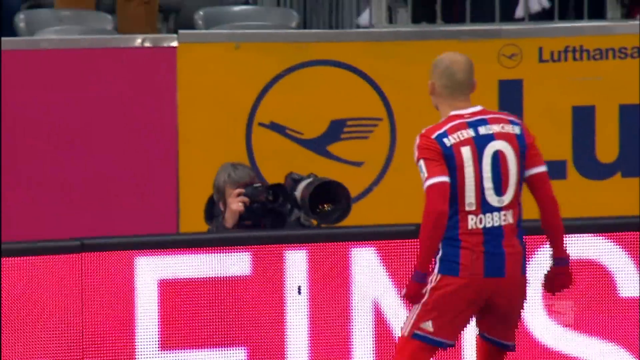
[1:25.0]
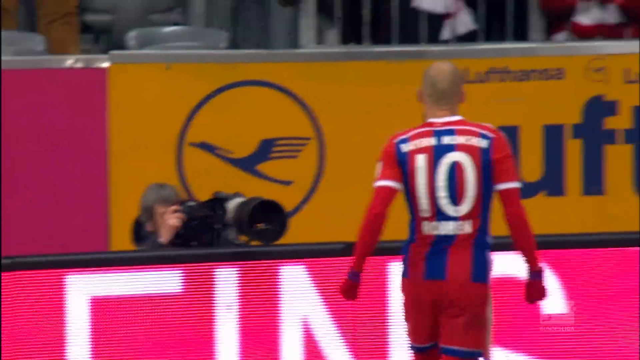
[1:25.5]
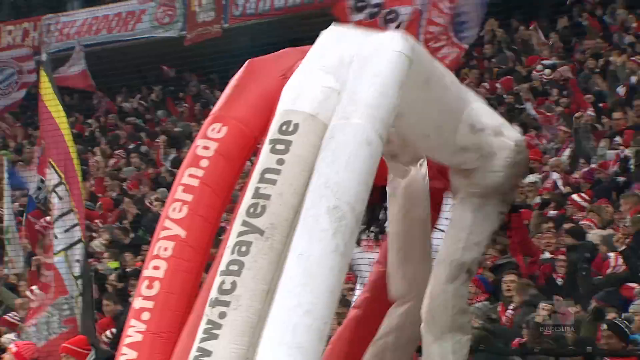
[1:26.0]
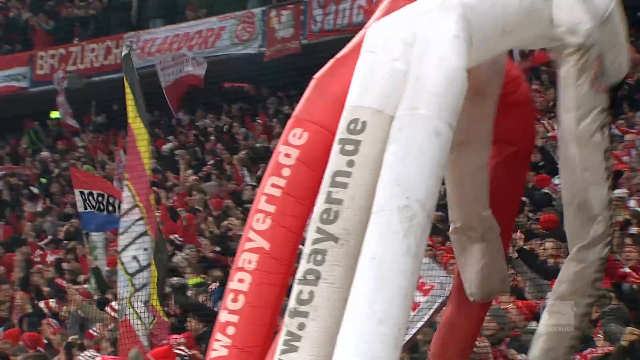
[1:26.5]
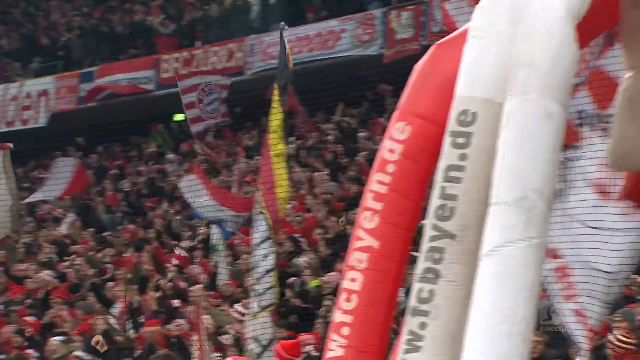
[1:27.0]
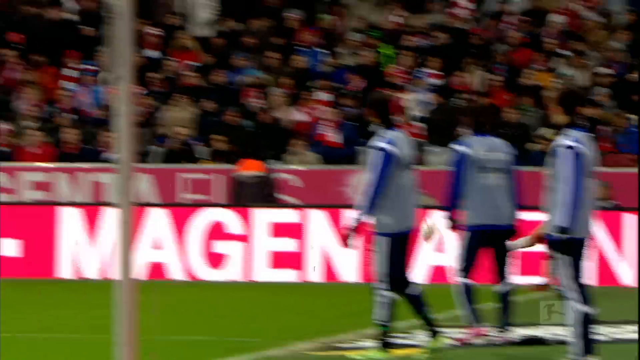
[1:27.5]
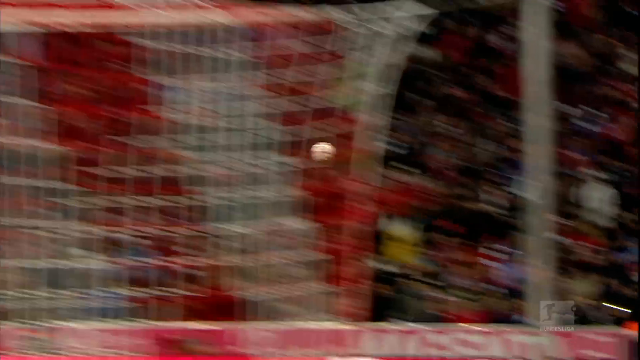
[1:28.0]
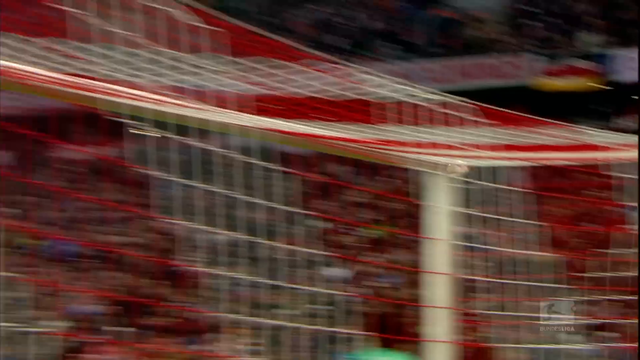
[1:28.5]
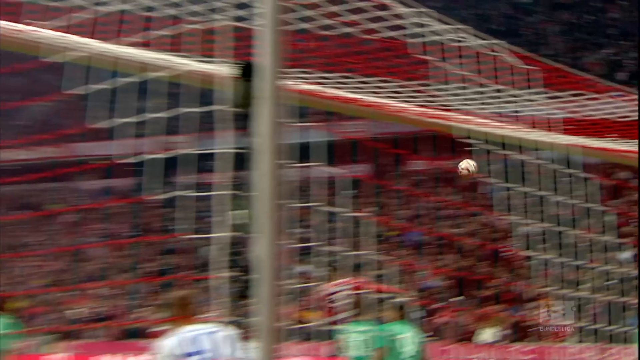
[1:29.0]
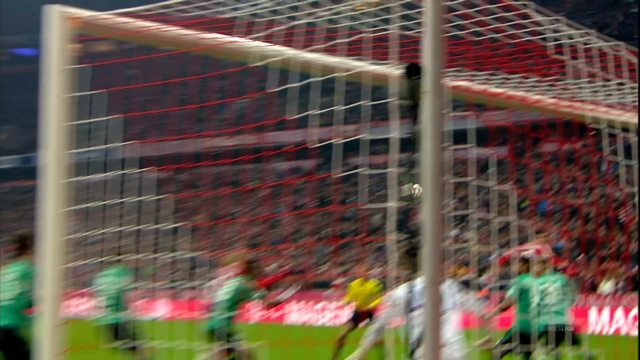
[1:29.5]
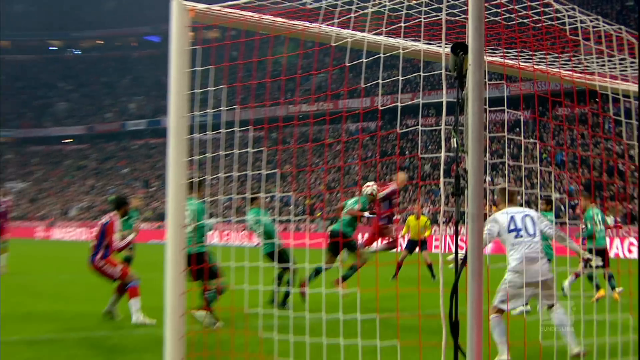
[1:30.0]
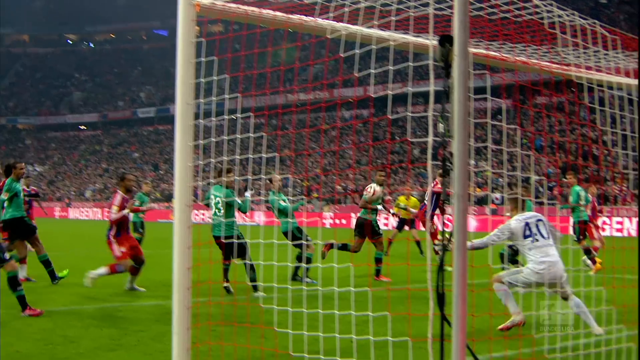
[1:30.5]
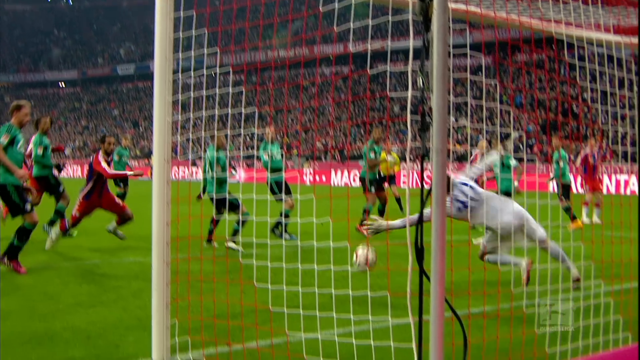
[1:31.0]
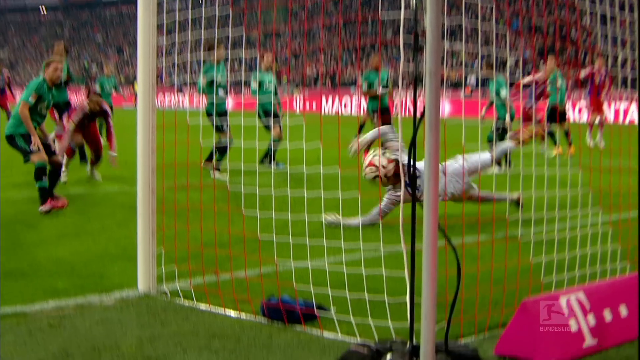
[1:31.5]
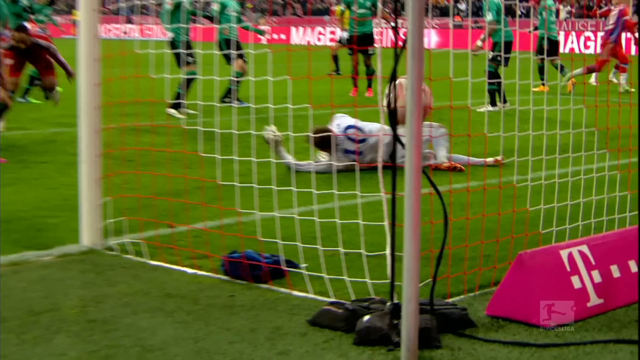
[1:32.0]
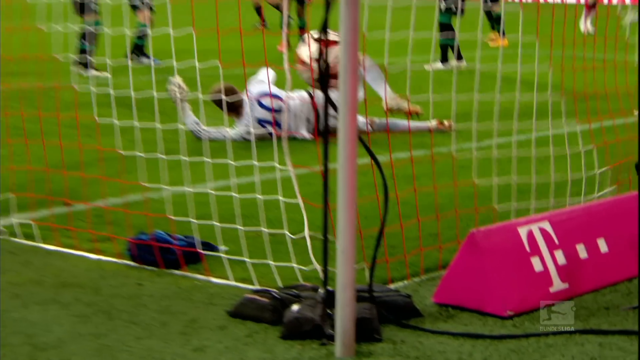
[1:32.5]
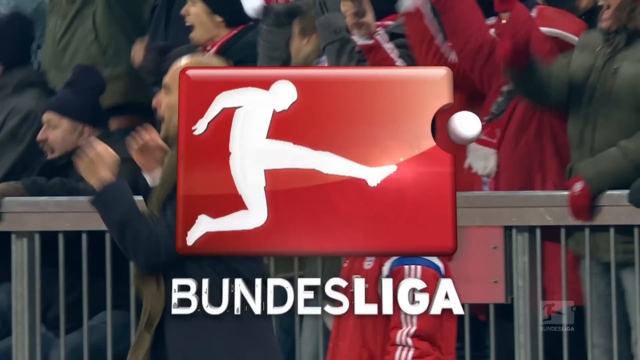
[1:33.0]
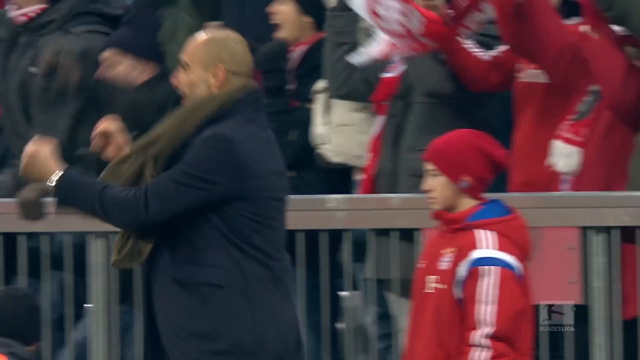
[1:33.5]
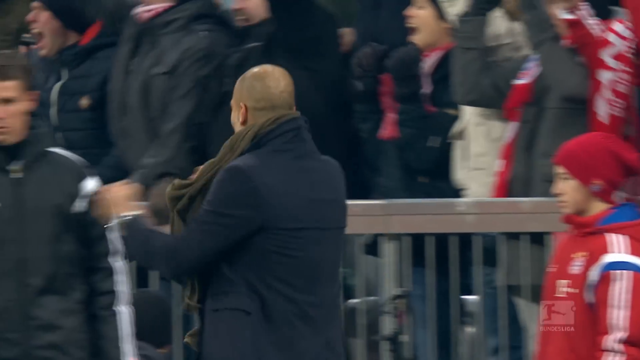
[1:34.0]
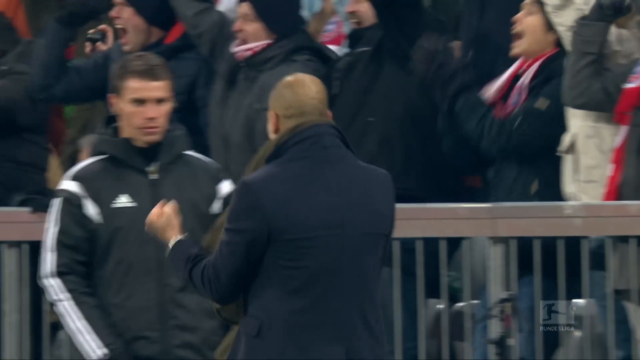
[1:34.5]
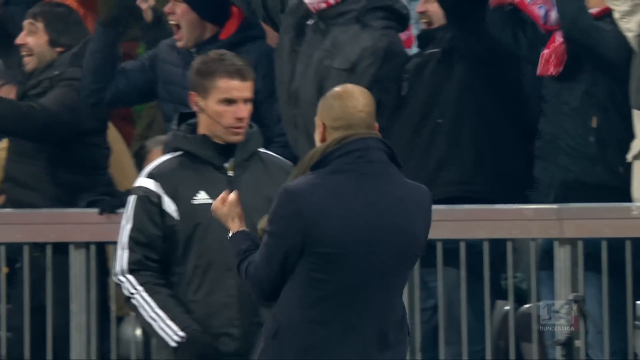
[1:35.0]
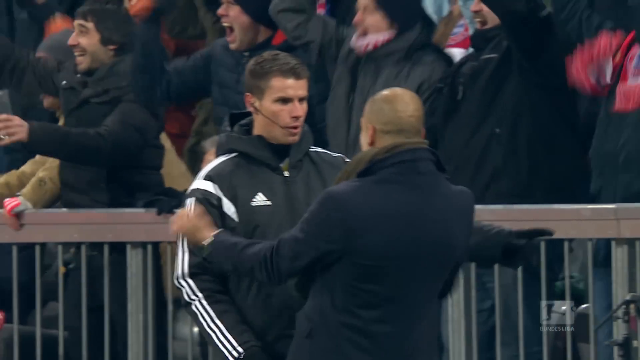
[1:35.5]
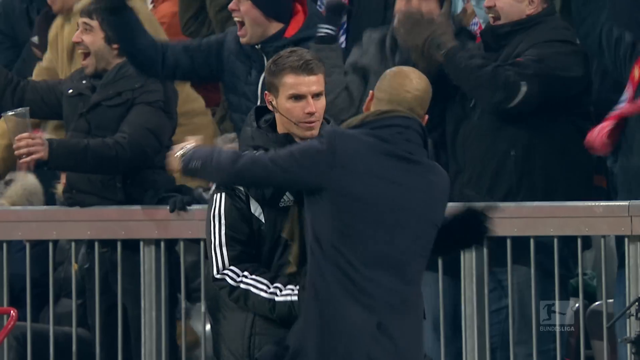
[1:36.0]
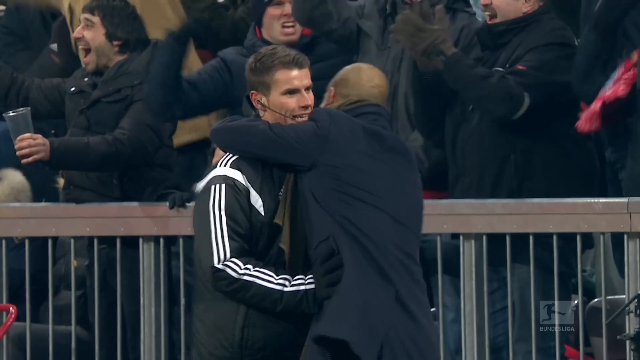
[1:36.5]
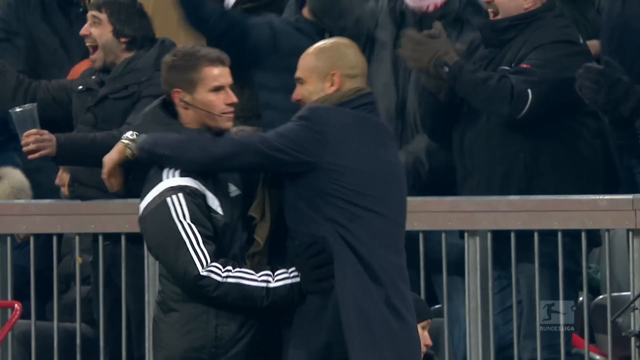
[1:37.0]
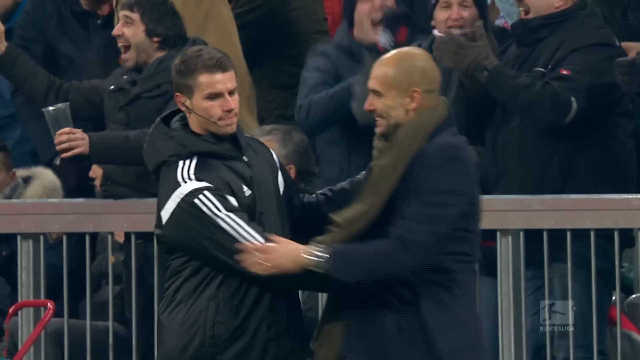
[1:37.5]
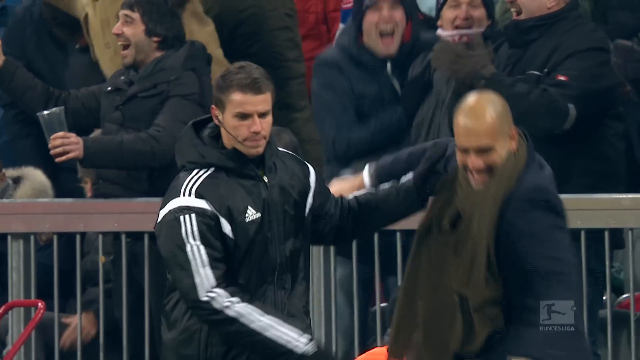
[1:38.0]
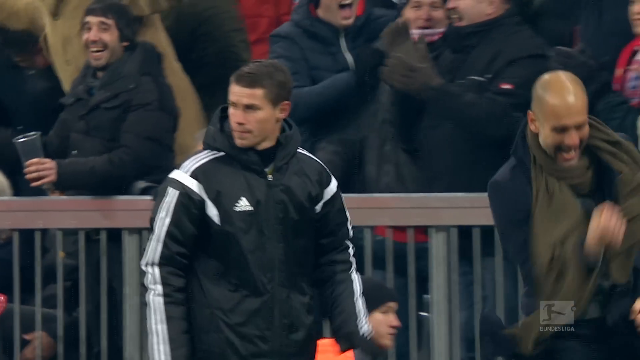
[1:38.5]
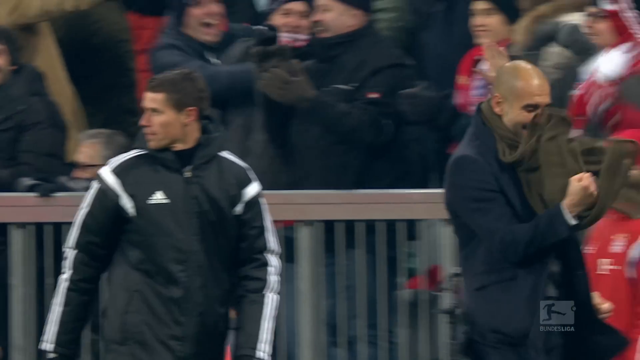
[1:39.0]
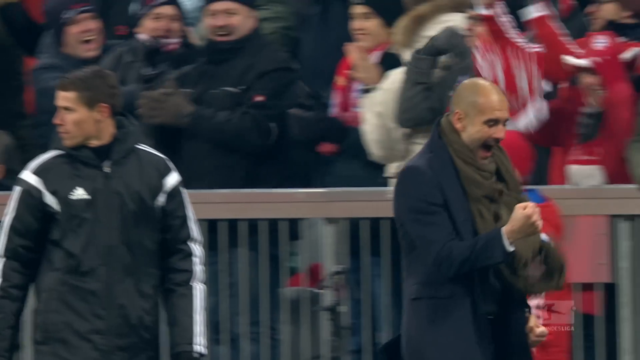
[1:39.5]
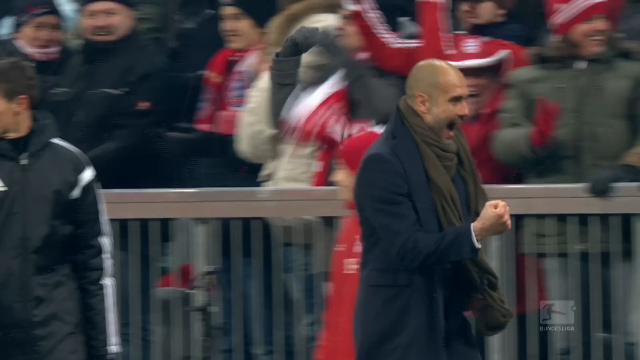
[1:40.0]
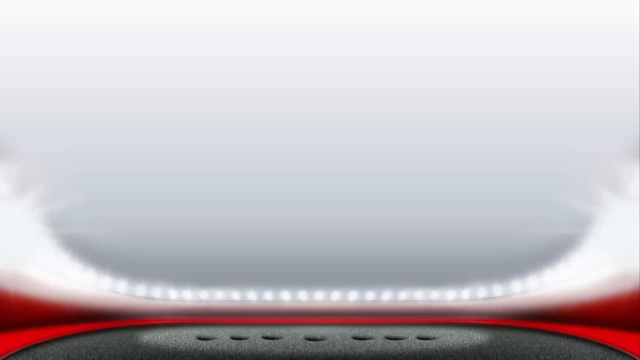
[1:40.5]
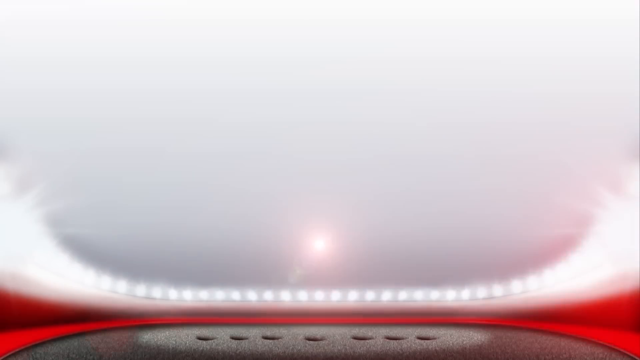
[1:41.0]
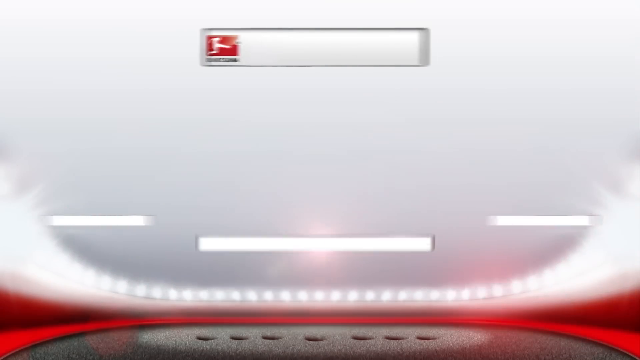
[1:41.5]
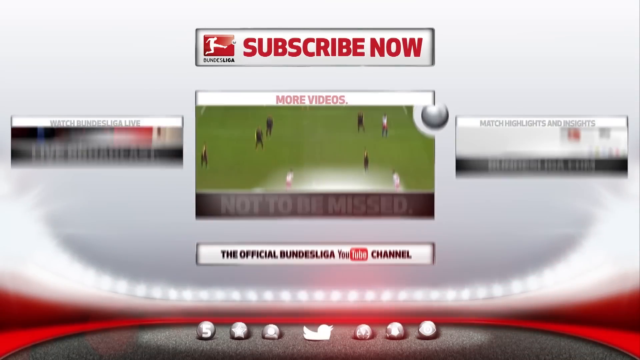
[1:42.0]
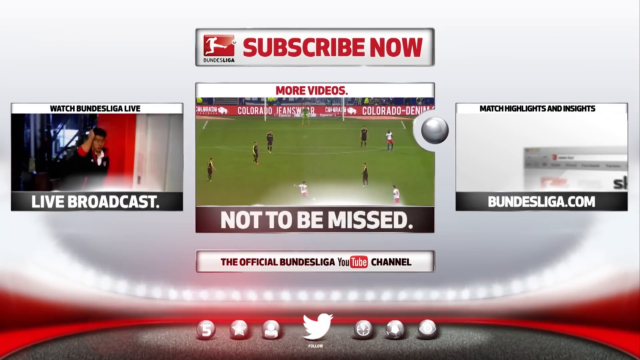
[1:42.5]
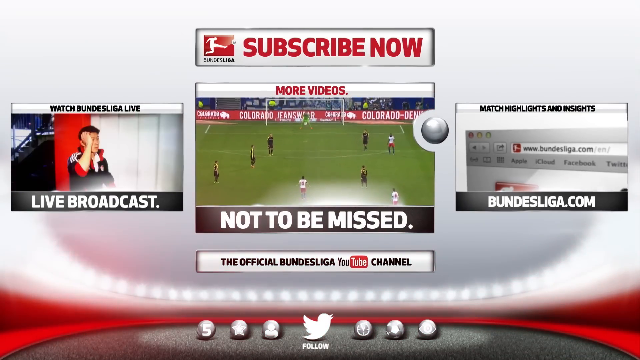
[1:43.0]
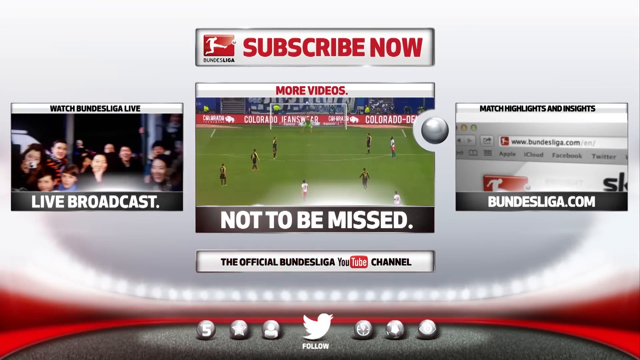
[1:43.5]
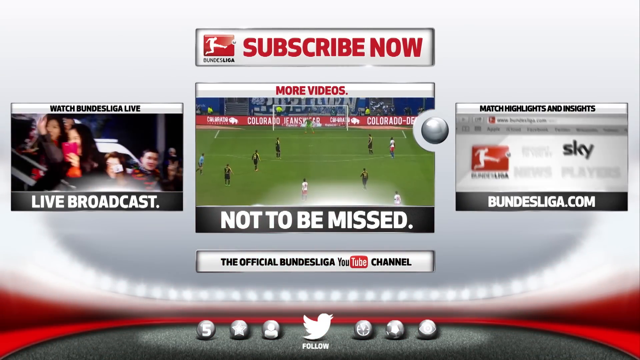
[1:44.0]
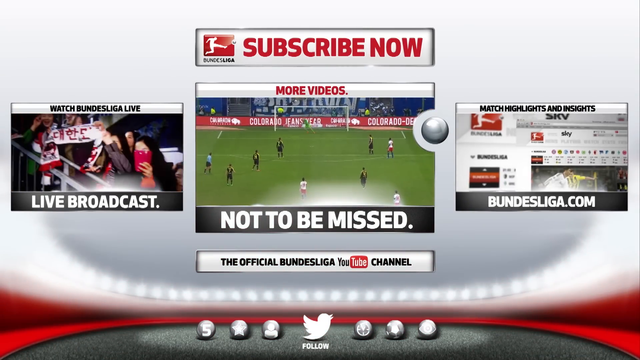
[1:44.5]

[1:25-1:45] The back of player number 10 is visible as he faces what looks like a video camera. Sort of inflatable plastic tubes are then shown, apparently as some kind of celebration, with a website ending in ".de", possibly an advertisement. A player in red kicks the soccer ball across the field; the ball is blocked and makes it into the net, apparently a replay of an earlier moment. Then probably the coach, the bald man in the long black jacket, faces another man with short brown hair wearing an Adidas black coat with white piping. The bald man moves his hands around, hugs the other man in an animated way, smiles, and in a celebratory manner moves his arm outward with his fist up. An image of what might be the top of an arena, white in color, is then superimposed, with "not to be missed" under a sort of screen showing soccer players playing, and various ads on either side.